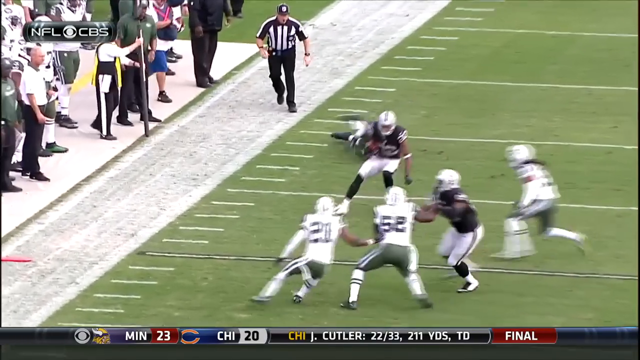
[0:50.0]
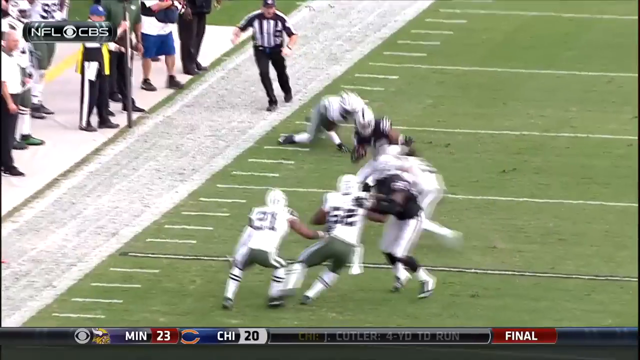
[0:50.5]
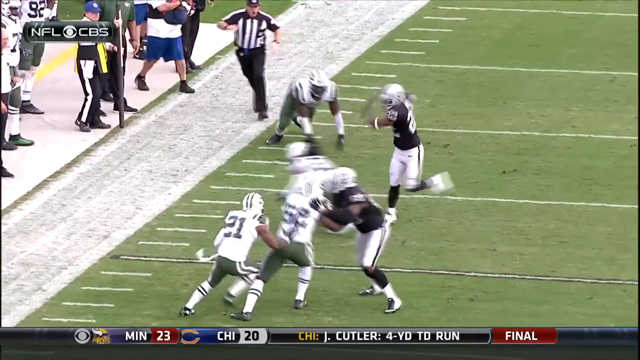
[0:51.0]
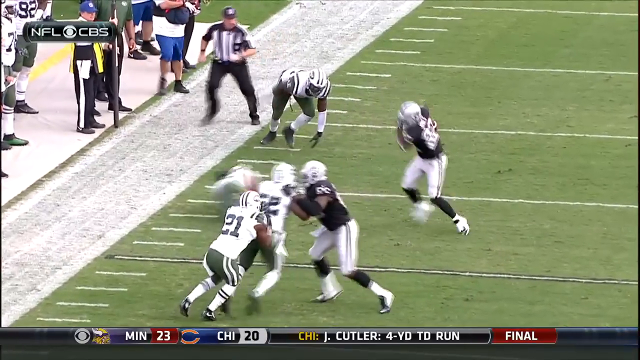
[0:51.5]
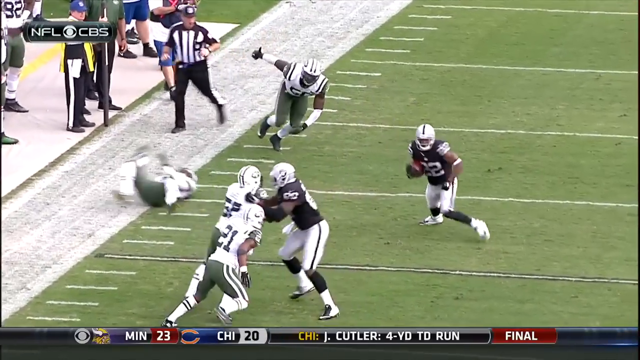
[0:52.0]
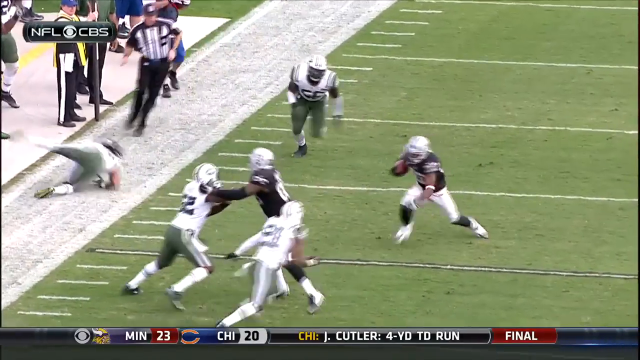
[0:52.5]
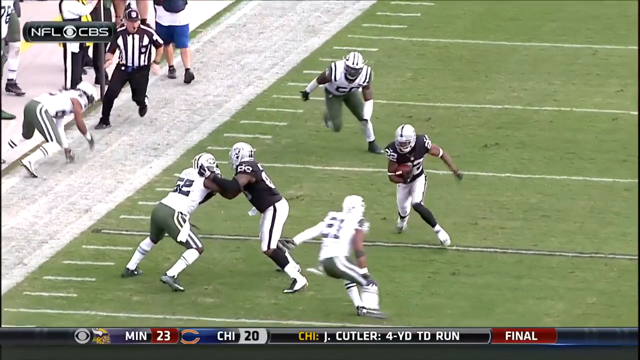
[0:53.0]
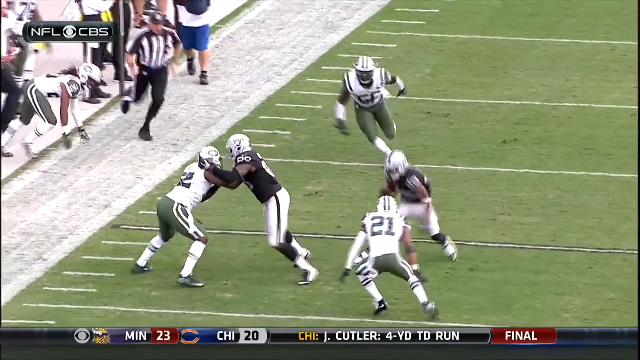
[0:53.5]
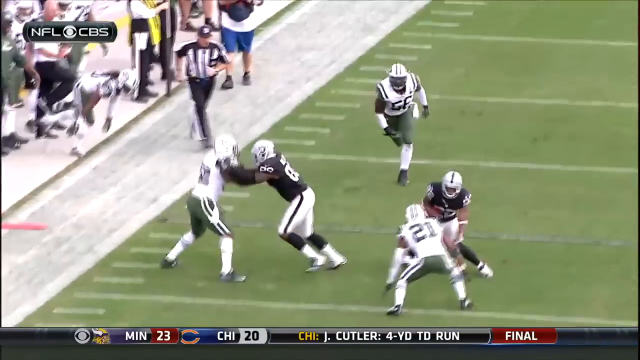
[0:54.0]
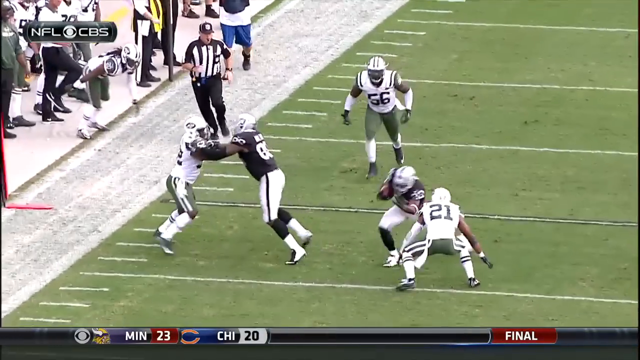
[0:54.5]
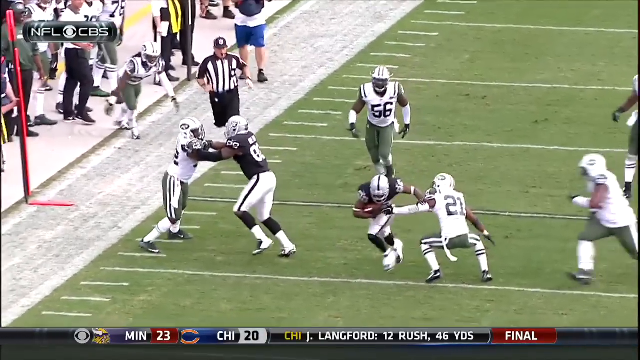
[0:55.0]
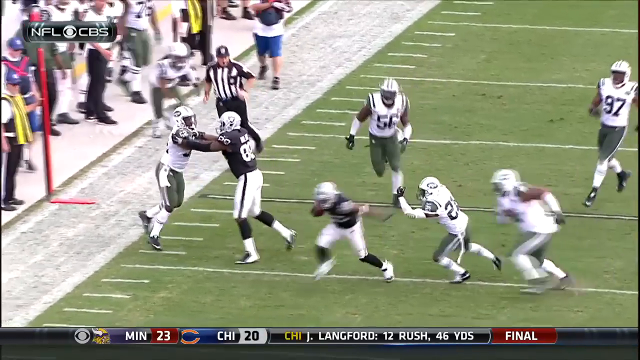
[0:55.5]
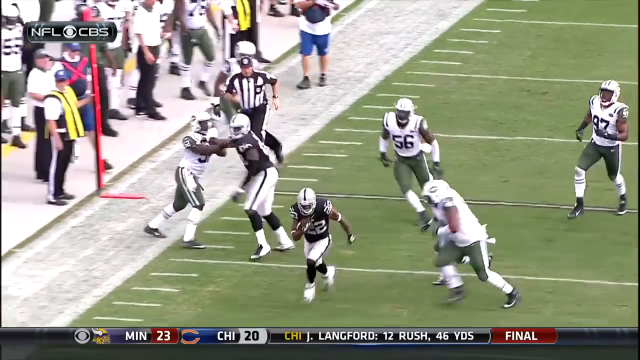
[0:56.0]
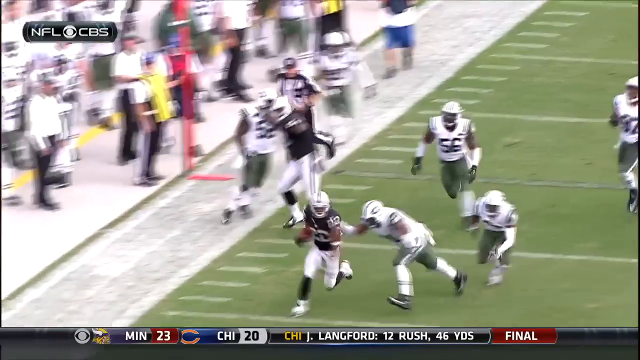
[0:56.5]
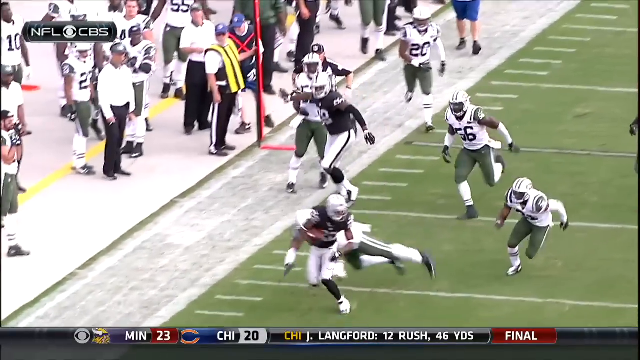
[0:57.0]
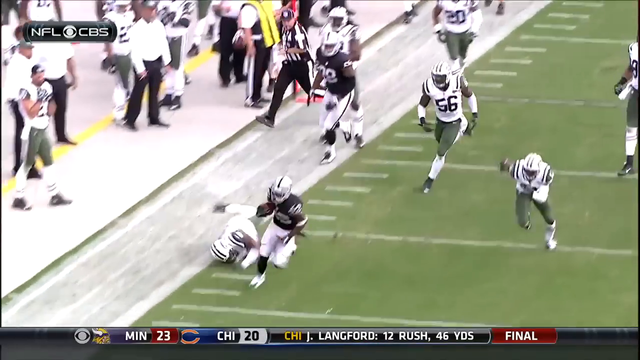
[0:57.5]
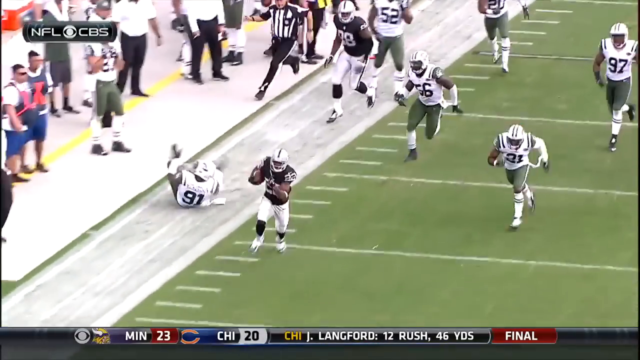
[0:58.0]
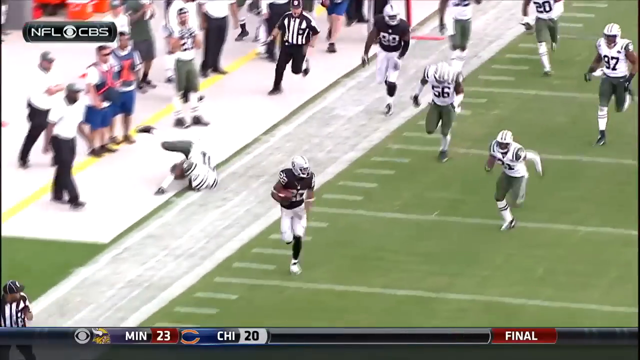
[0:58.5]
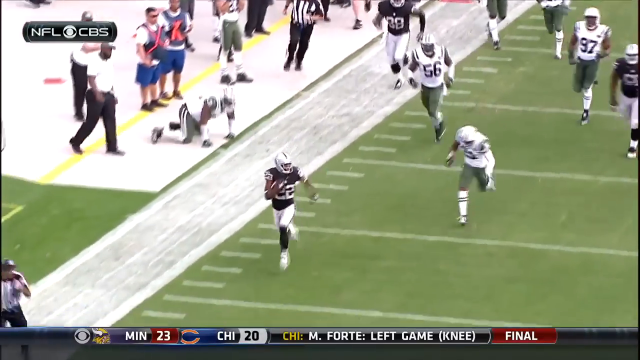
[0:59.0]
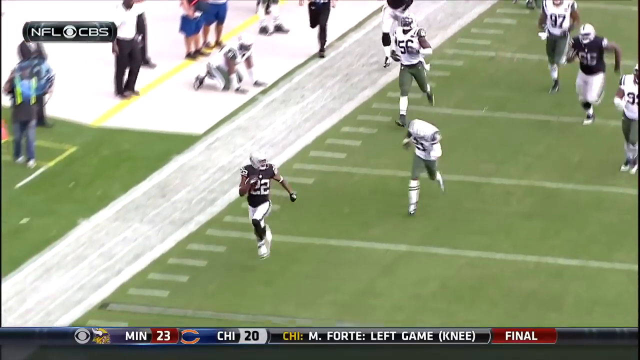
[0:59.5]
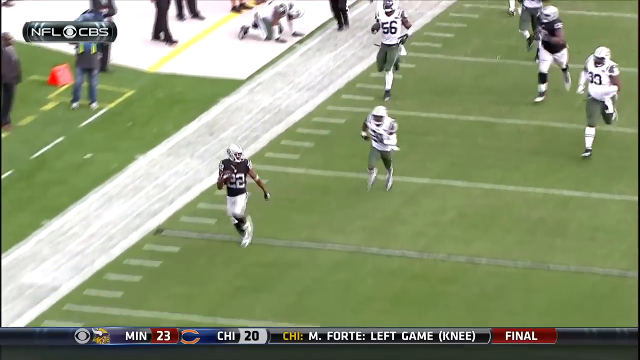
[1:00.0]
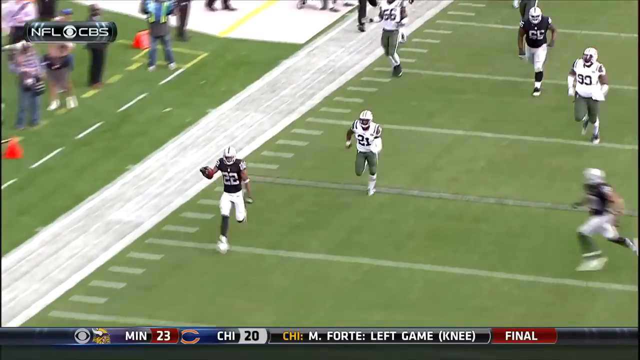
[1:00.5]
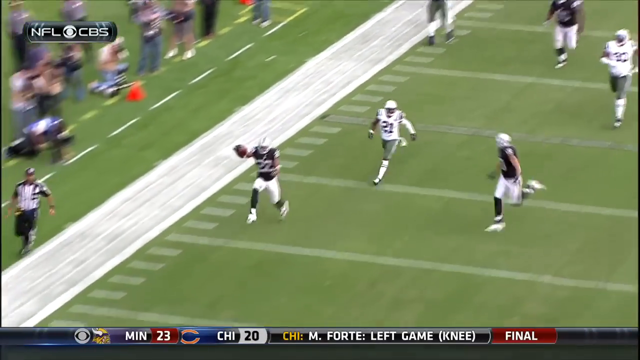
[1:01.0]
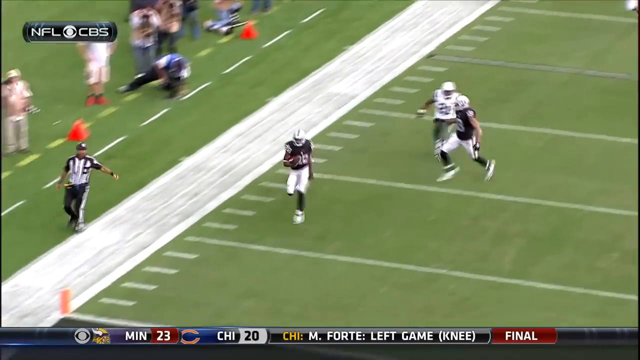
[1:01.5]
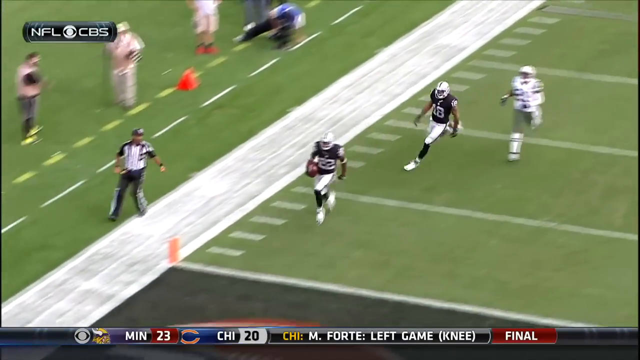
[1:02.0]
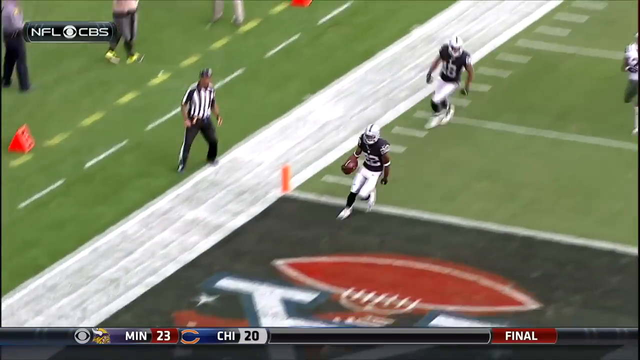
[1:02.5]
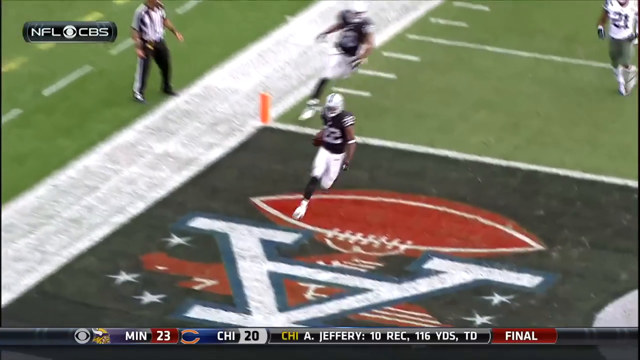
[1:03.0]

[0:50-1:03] In the replay, Tywin Jones pushes off the defender, number 20, then pushes number 21 and jukes him. Number 91, a defensive lineman, tries to tackle him and somersaults. Jones takes off for the touchdown, galloping at the end, but the replay is cut short and he does not really do a celebration. Watching from the sideline are the New York Jets, probably the offensive team, all the coaches, and the people who move the lines. A coach steps back after number 91 rolls and almost hits him. A referee chases after Jones, and the end zone referee runs ahead of him, anticipating where he is going.